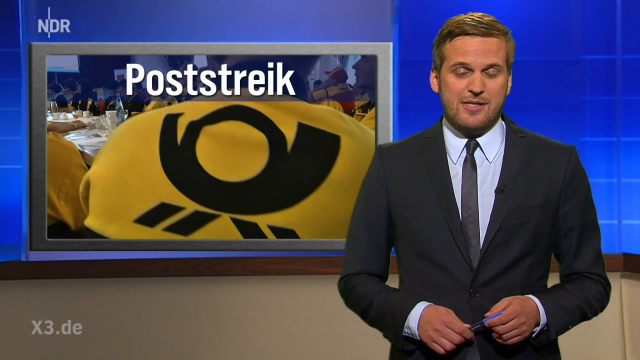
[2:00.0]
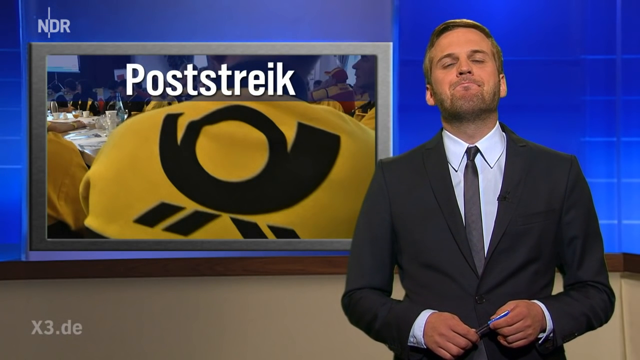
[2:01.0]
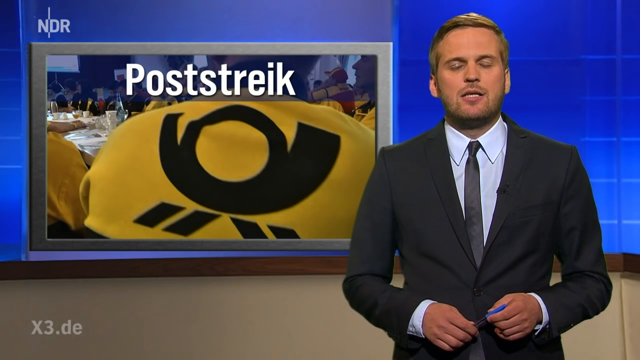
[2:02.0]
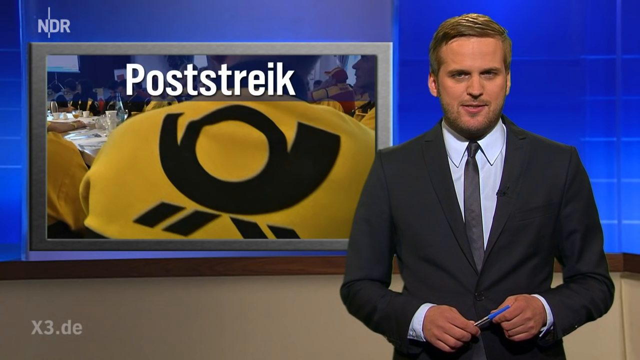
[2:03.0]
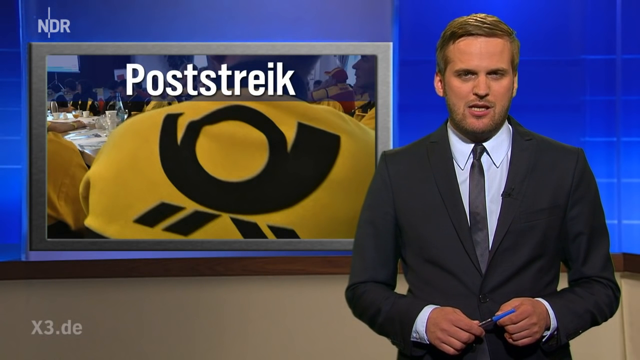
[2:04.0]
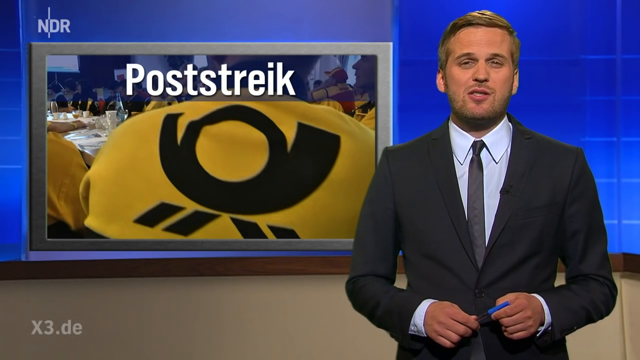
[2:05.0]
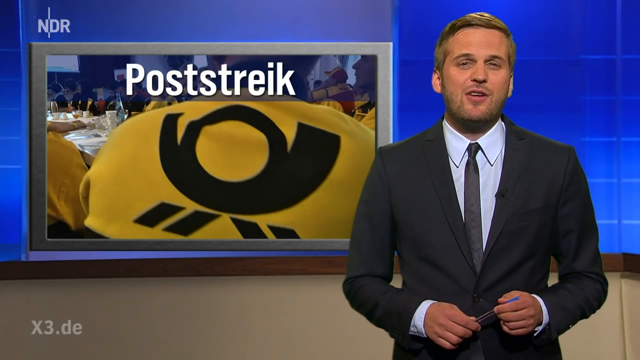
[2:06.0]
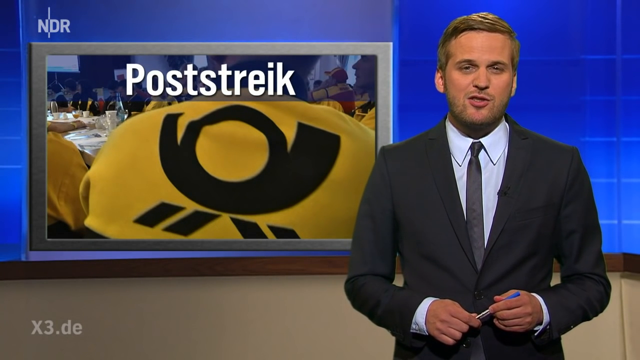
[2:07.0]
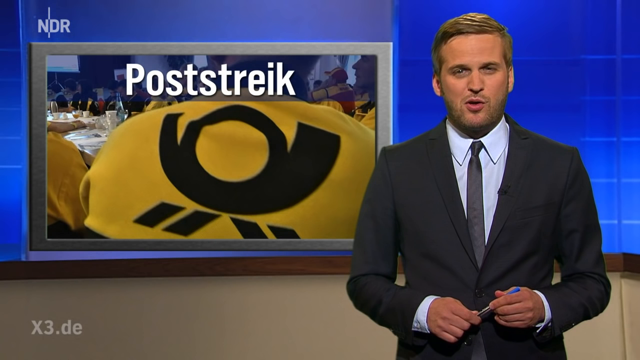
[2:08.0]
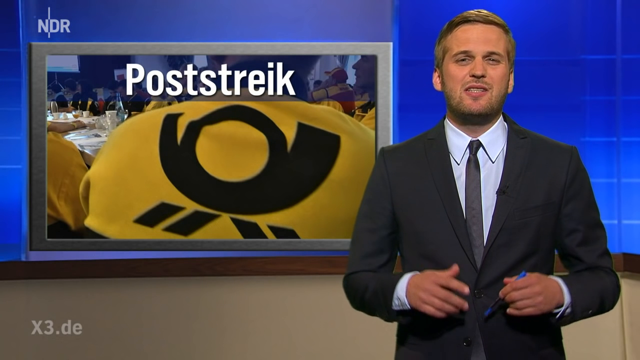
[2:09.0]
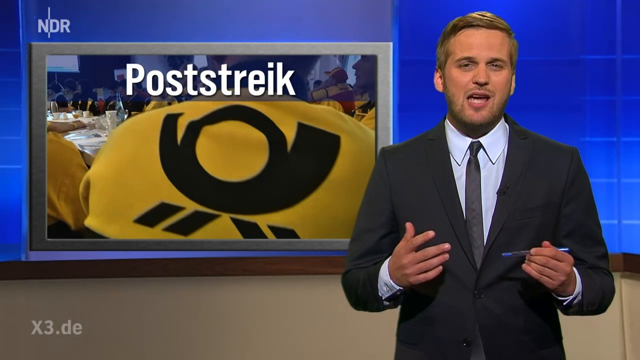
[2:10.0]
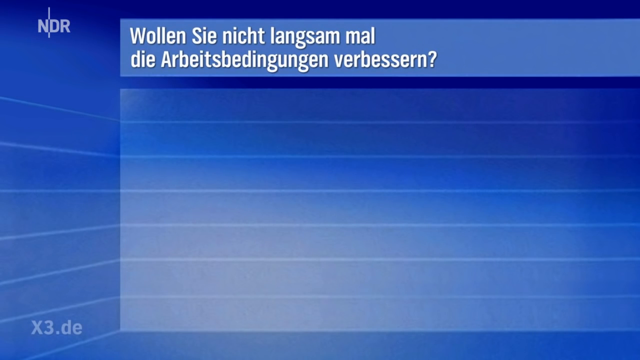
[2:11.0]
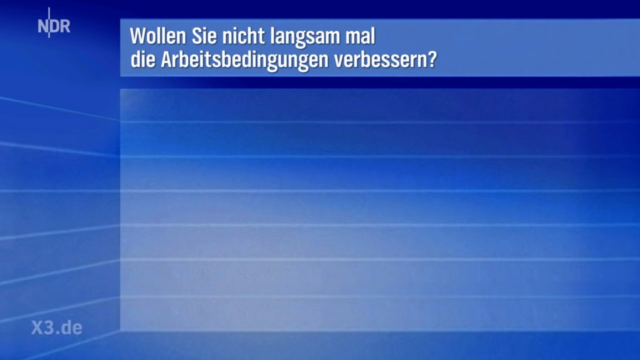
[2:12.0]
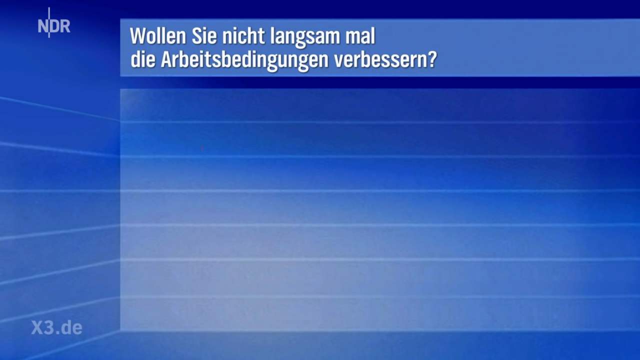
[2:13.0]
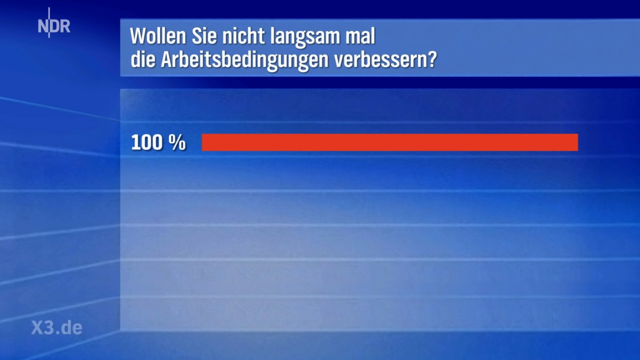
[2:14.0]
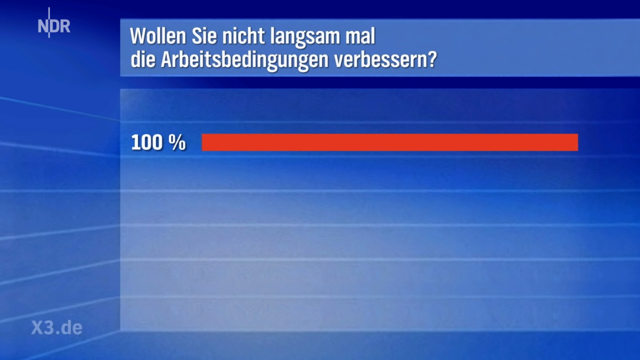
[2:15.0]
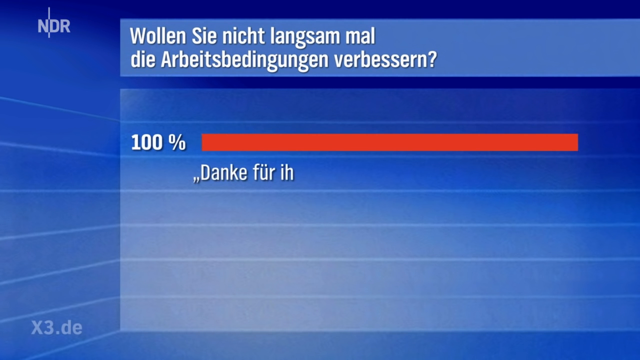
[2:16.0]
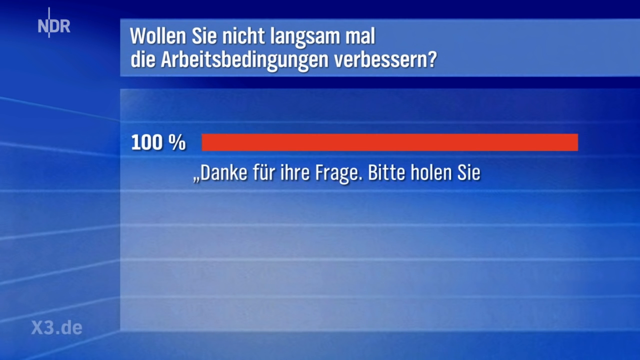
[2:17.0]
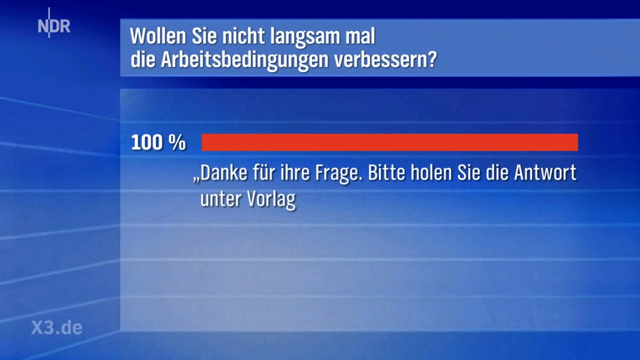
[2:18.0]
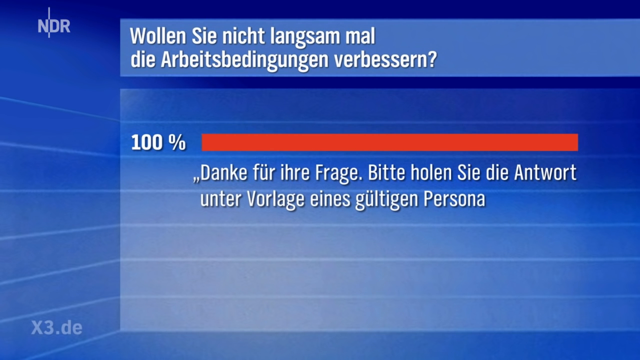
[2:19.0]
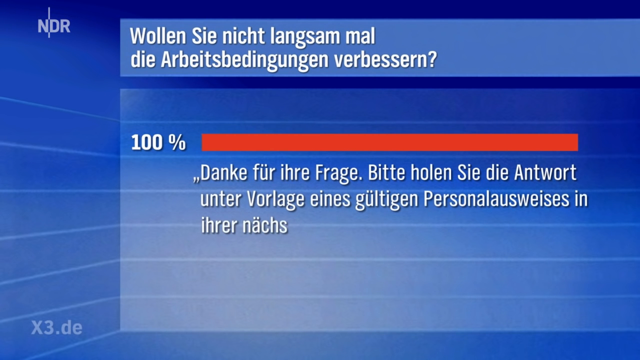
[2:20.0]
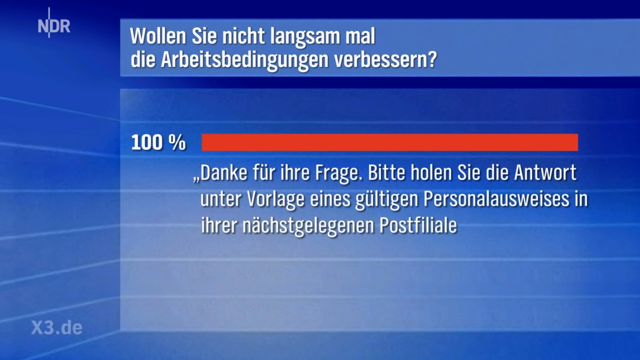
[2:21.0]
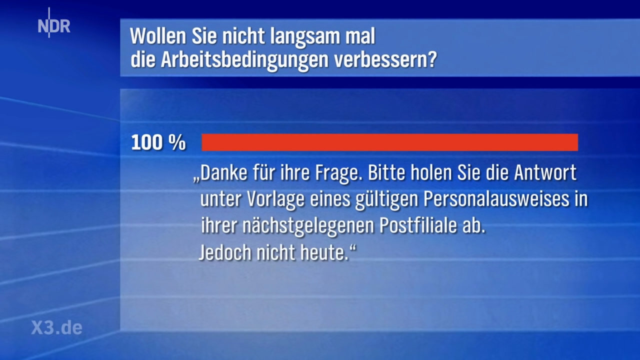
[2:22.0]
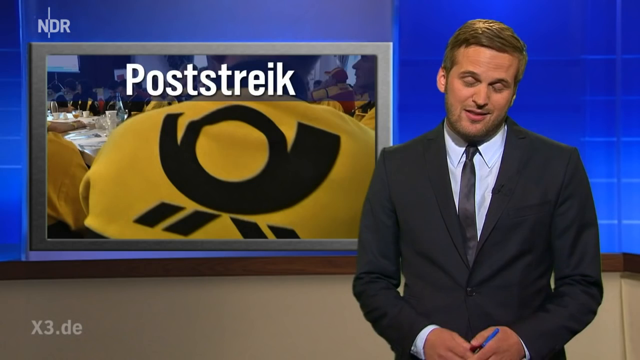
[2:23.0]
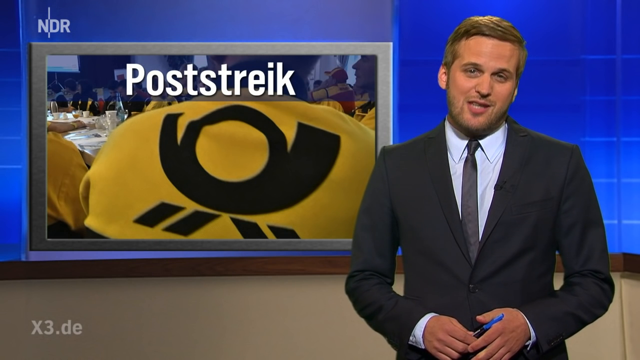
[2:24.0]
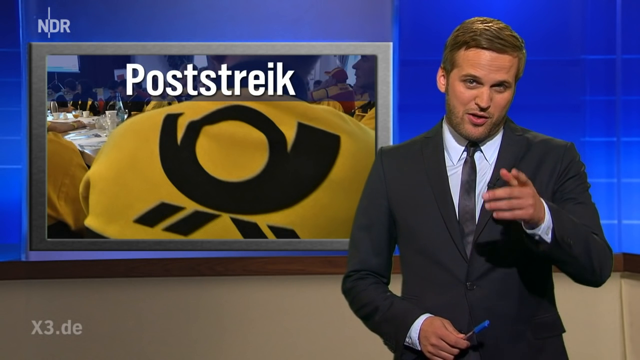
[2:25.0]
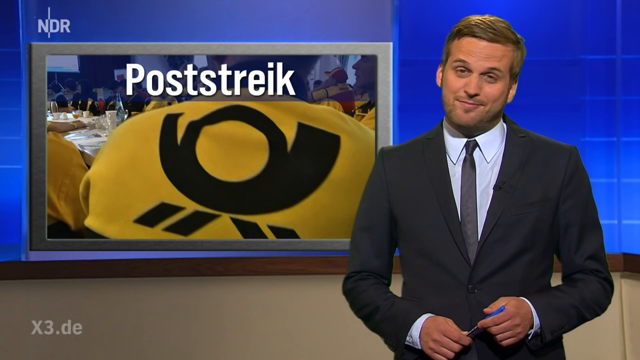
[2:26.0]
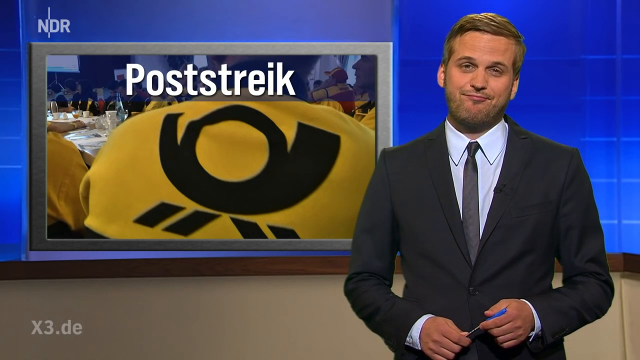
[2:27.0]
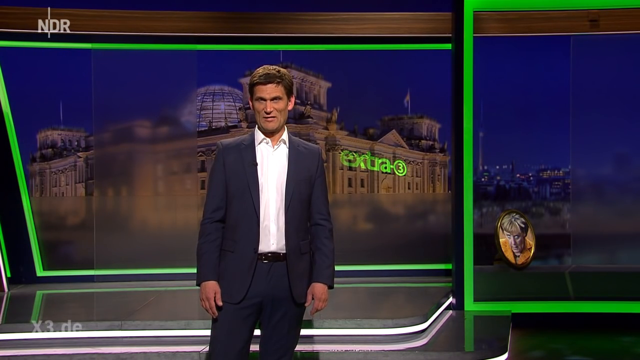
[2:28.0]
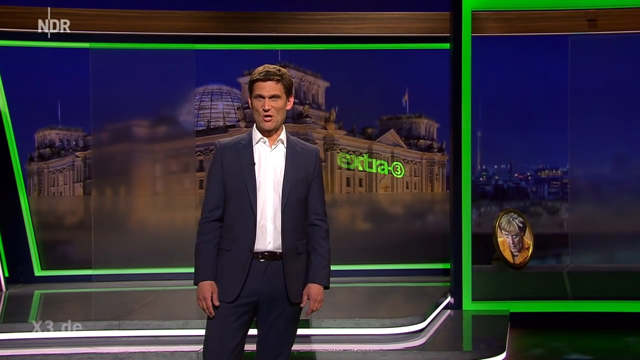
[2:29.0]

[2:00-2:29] A silver monitor shows "Poststreik" in white. On the right side is still the second reporter, talking and holding a blue pad that appears to be in his right hand from the viewer's side but is actually in his left. The screen then shows the questions in white text again; one question is longer than the other two and shows "100%" with a long red bar, with four lines of white text in which the word "in" is recognizable. Near the end, the reporter points a finger at the screen with the same hand that holds the pen, and the video then cuts back to the first man as it ends.